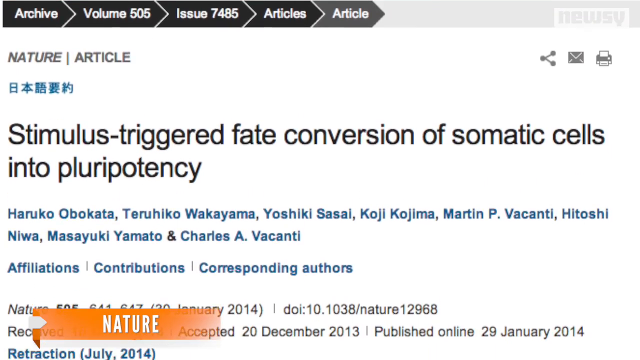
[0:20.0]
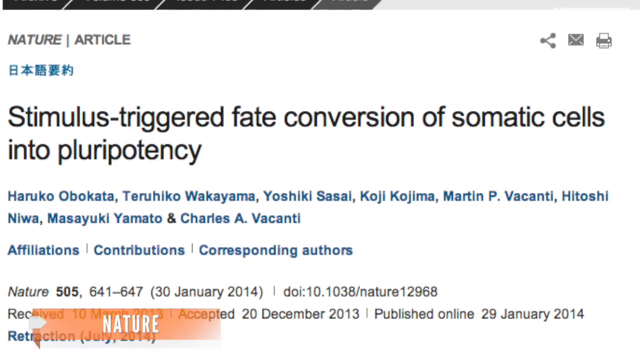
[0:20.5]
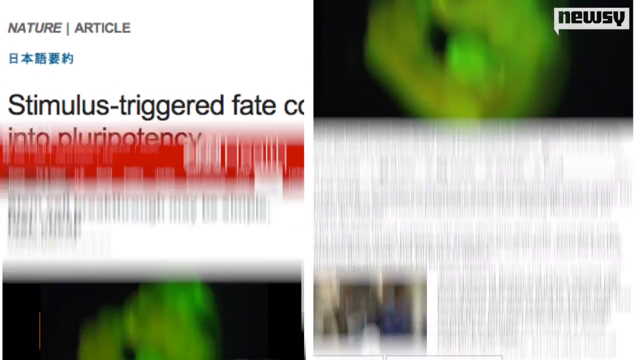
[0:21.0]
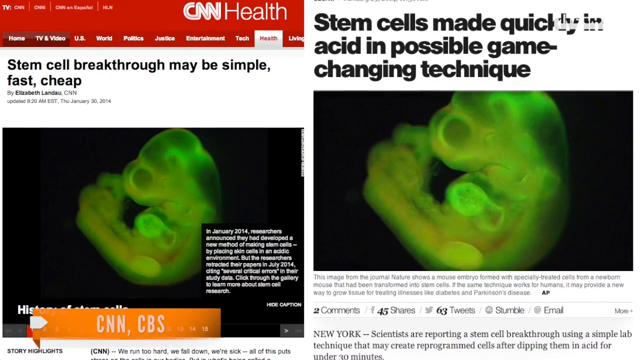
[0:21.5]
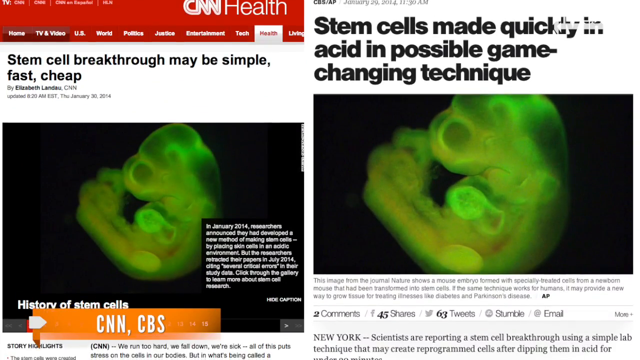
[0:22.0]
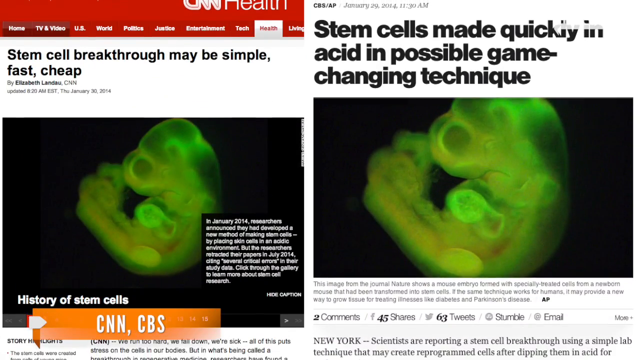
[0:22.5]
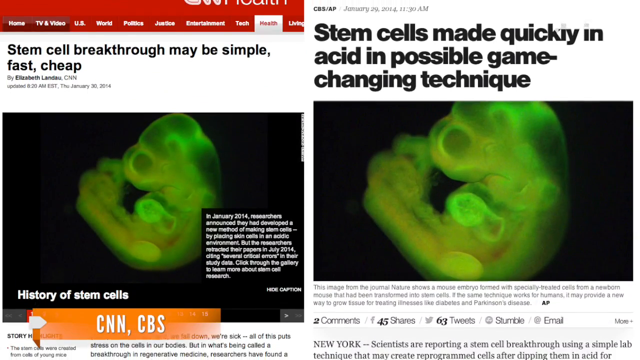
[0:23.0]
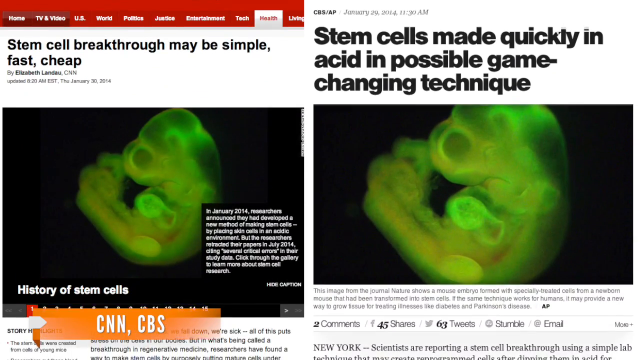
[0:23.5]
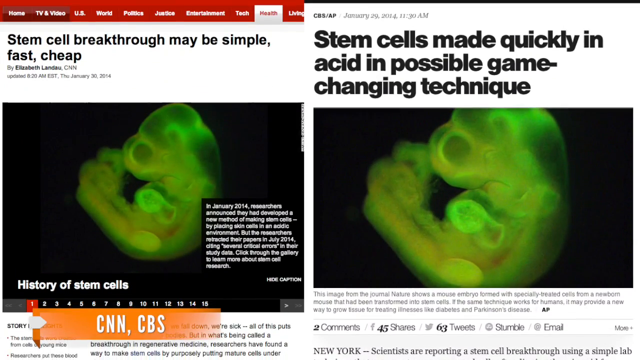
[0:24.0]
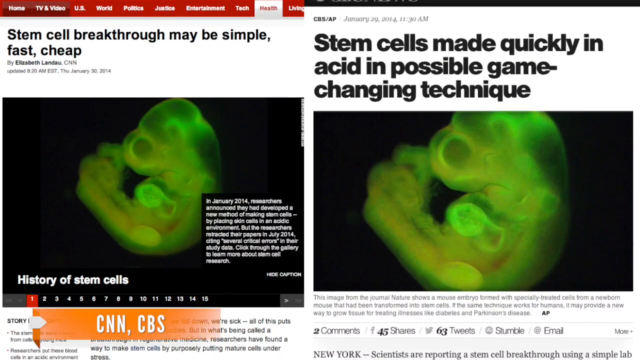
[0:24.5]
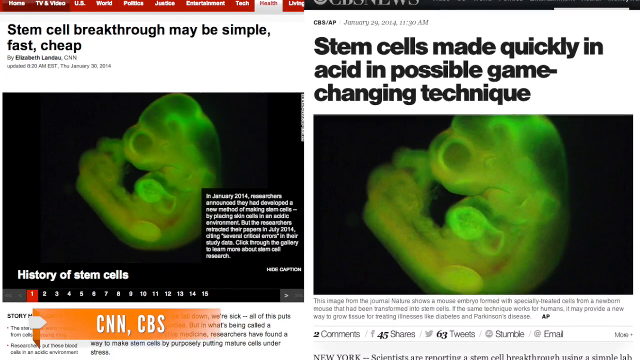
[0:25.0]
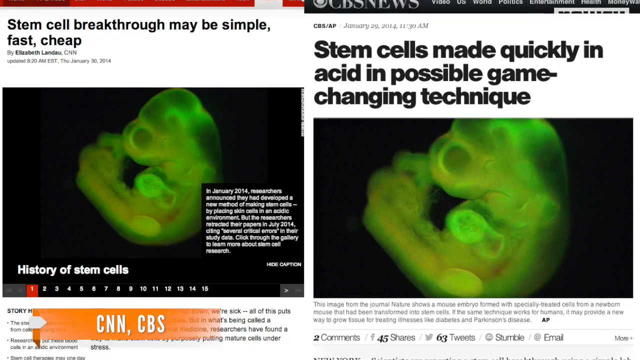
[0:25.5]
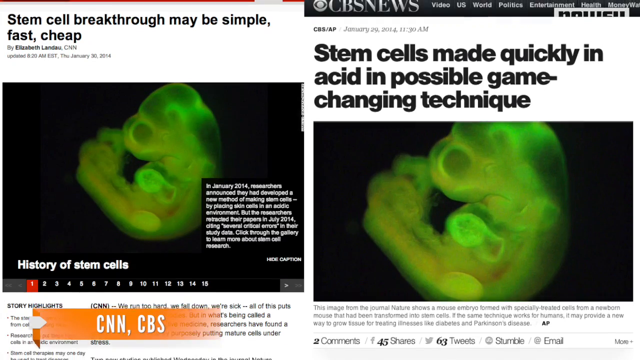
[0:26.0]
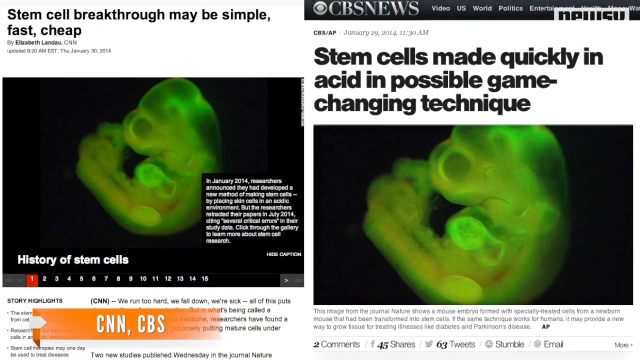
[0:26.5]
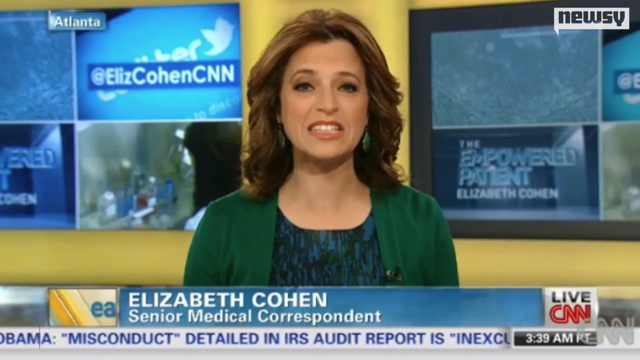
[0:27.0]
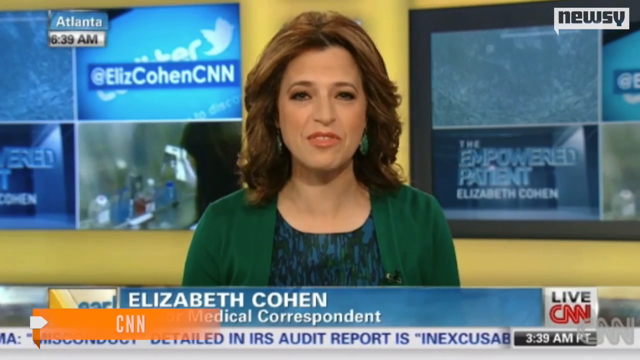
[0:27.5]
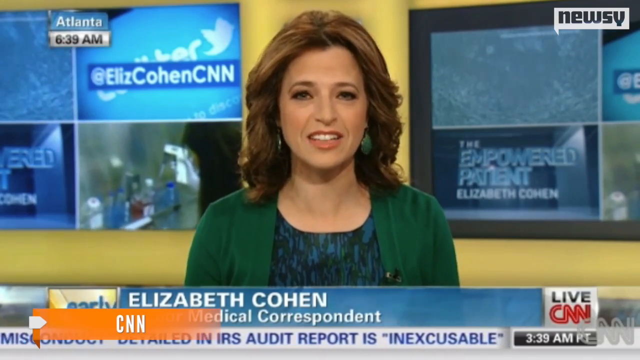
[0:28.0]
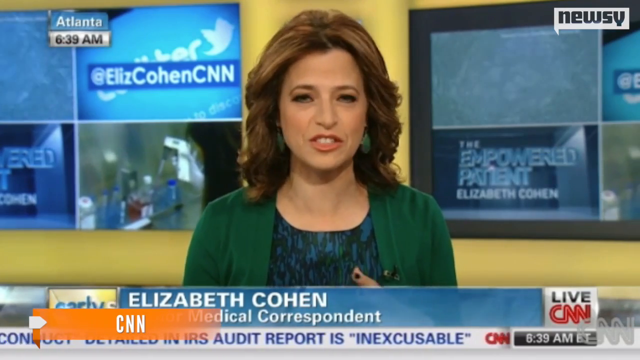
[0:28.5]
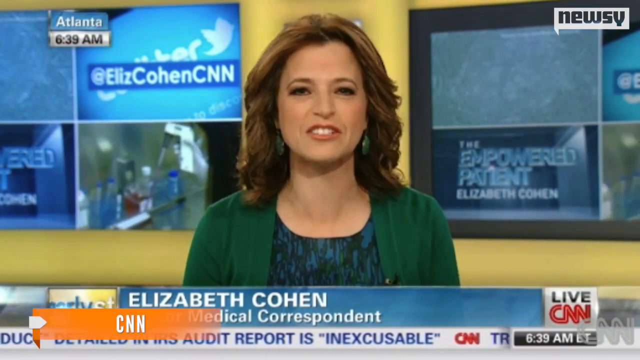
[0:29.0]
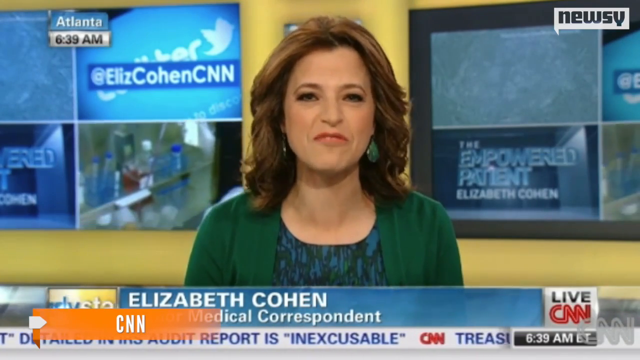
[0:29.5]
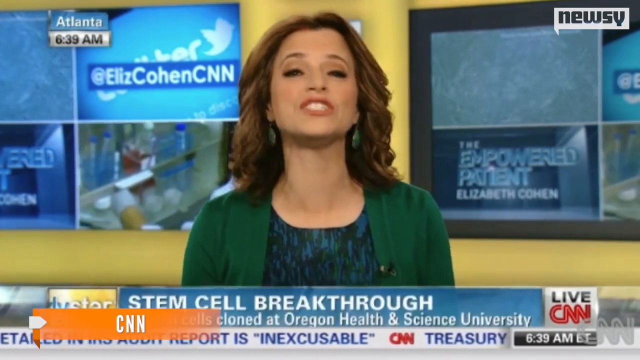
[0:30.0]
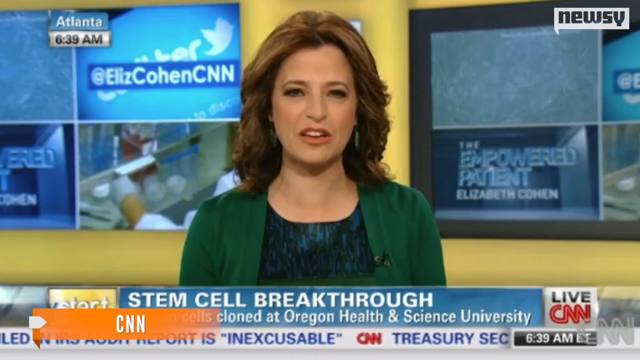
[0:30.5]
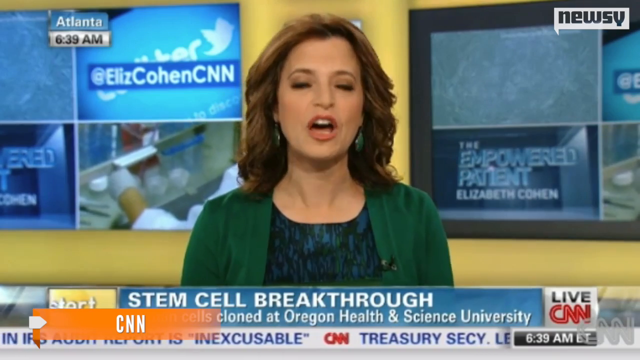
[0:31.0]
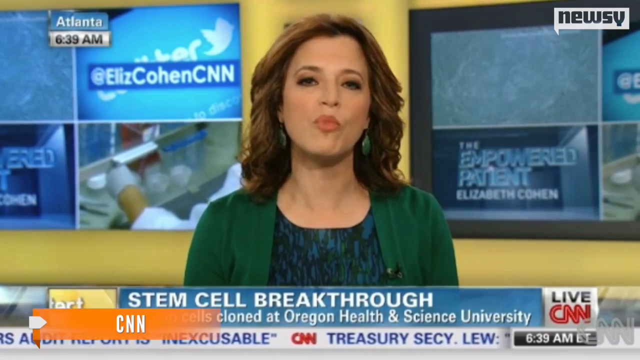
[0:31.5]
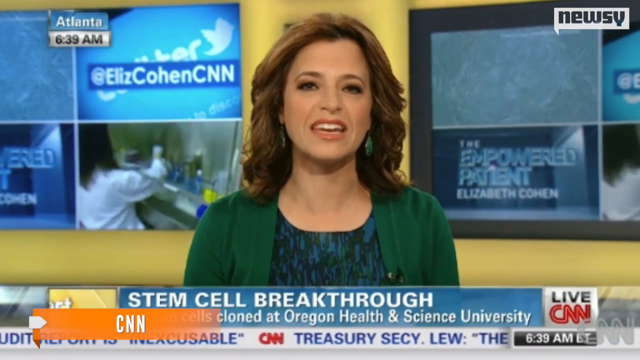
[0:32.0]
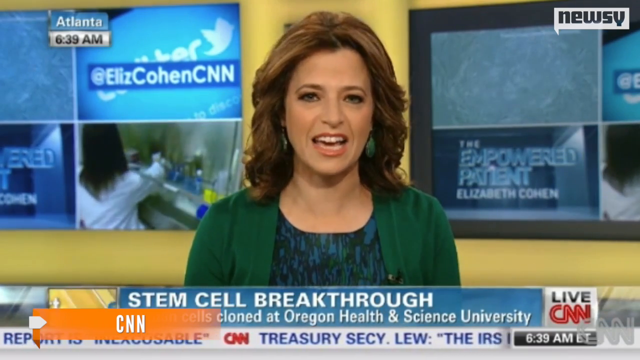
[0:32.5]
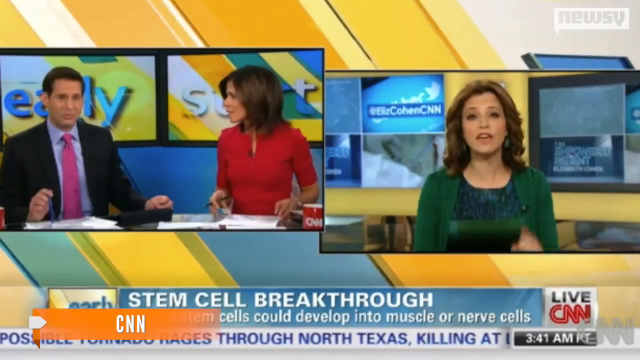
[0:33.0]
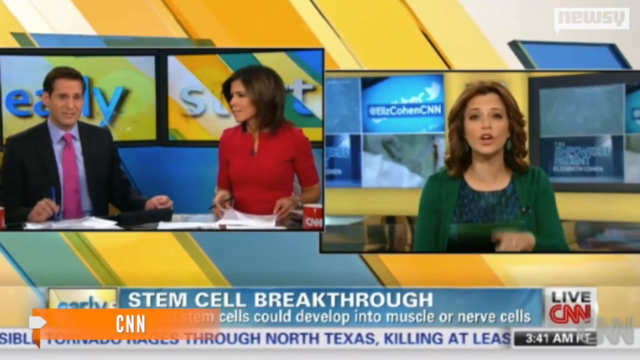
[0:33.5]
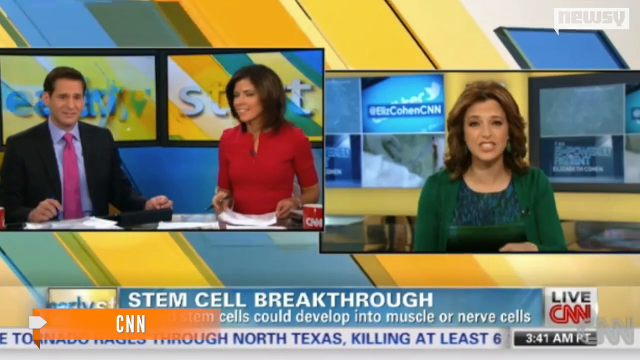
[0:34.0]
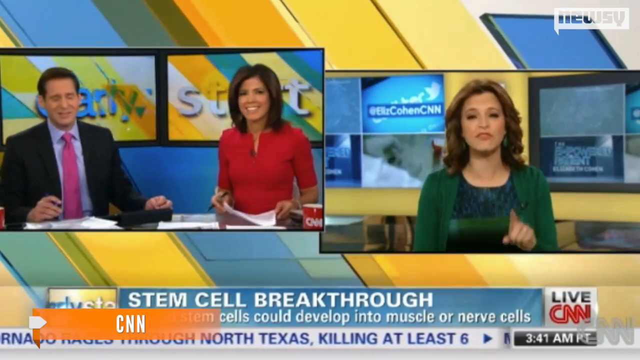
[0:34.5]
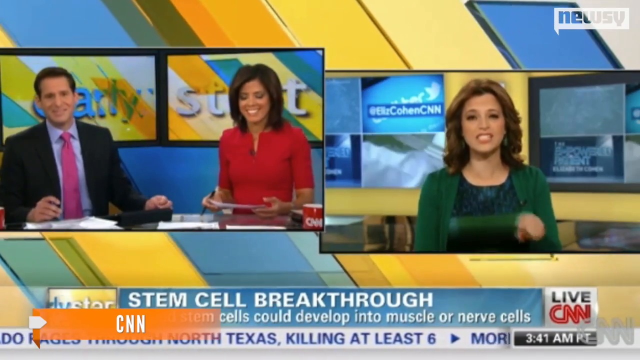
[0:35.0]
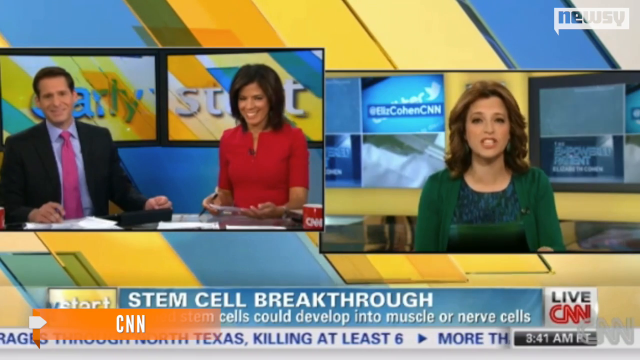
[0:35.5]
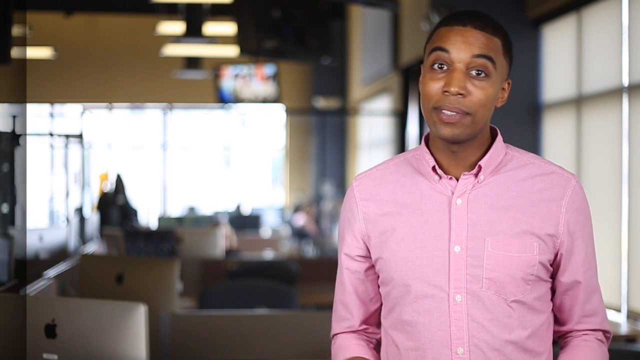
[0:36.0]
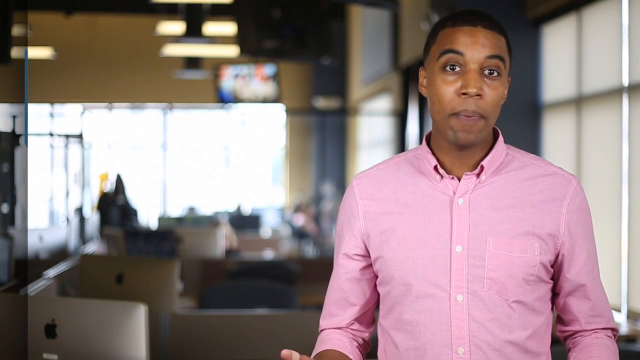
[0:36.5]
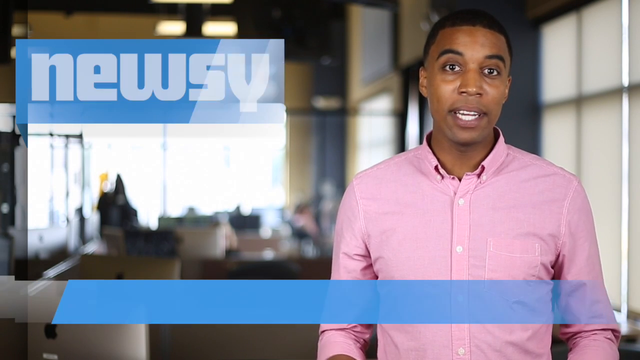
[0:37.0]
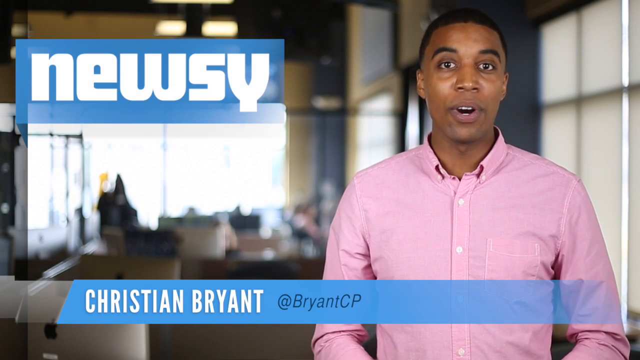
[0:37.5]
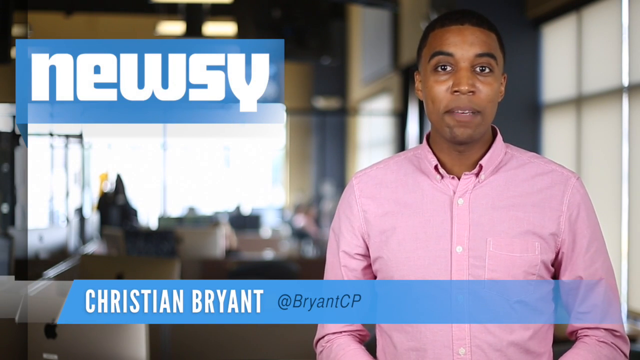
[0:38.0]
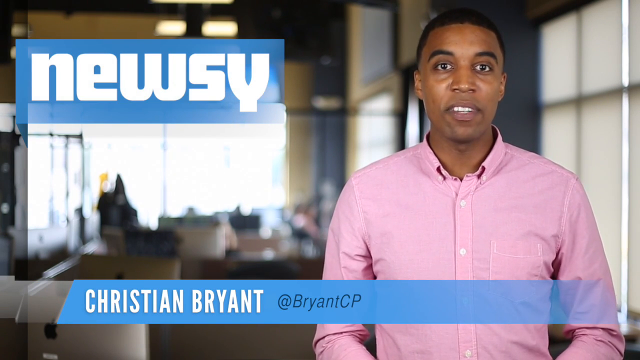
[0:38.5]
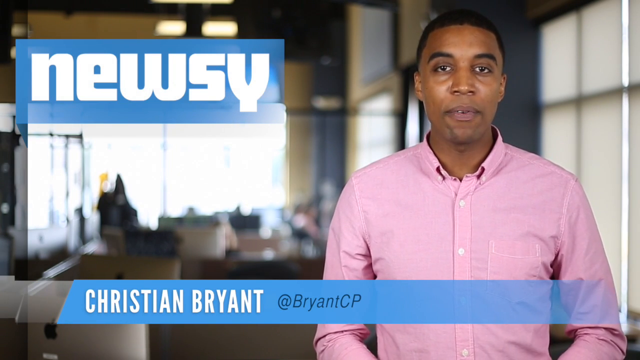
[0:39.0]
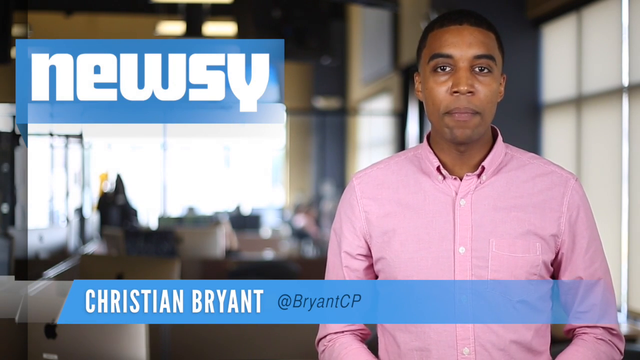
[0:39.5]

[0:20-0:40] The article about the "triggered fate conversion of somatic cells" is shown. More articles follow, with "CNN Health" and a headline reading "stem cell breakthrough may be simple, fast, cheap," along with another stem cell headline mentioning a "game-changer technique"; the labels CNN and CBS appear. Text then reads "the history of stem cells." Elizabeth Cohen, a medical correspondent at CNN, appears in a green cardigan, what looks like a blue dress, and green earrings, with brown hair. She is talking beside the text "stem cell breakthrough," with something about cloning at Oregon Health and Science University. Two other news people then sit at a CNN news table: a woman in a red dress and a man in a black blazer, light blue shirt and pink tie. Another man, Christian Bryant, appears; he is African-American and wears a pink shirt, with the name "Newsy," apparently the name of the TV segment.